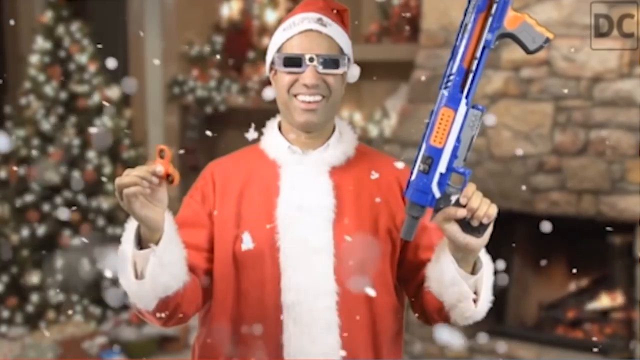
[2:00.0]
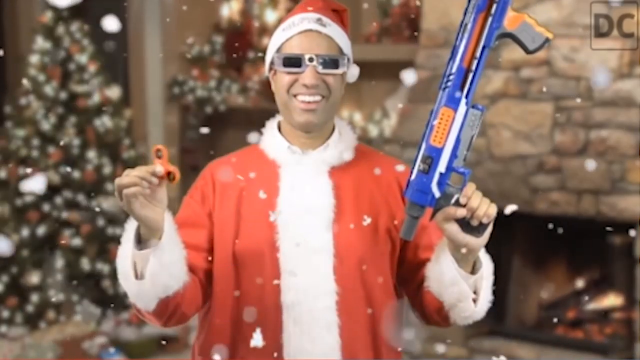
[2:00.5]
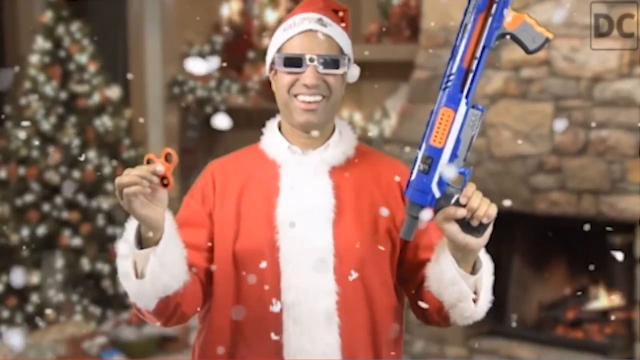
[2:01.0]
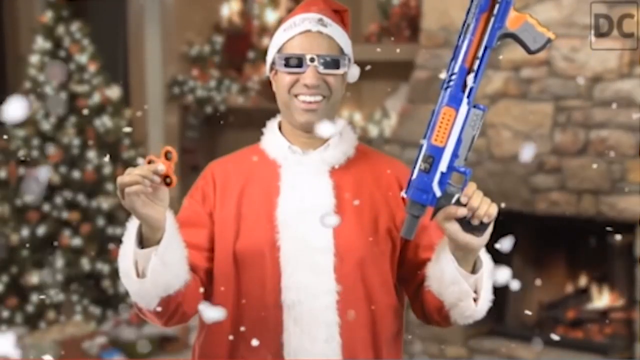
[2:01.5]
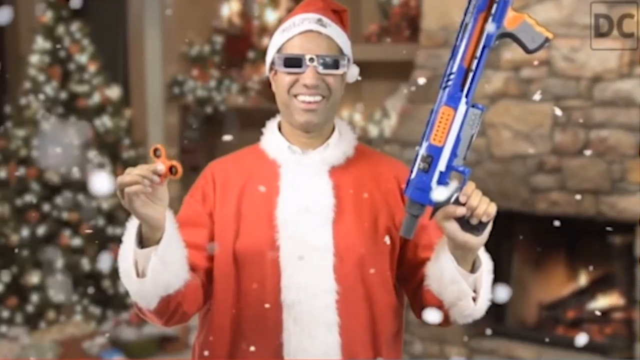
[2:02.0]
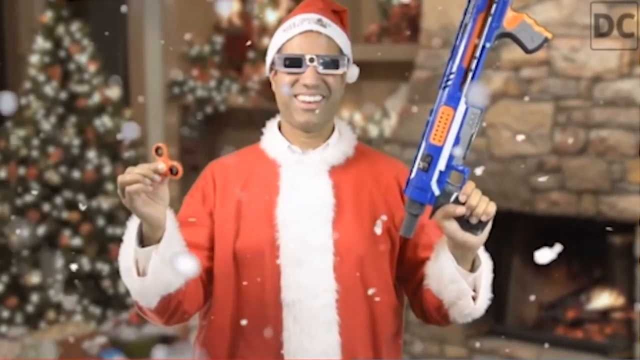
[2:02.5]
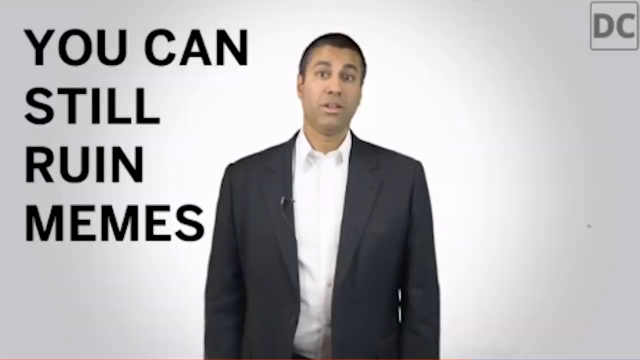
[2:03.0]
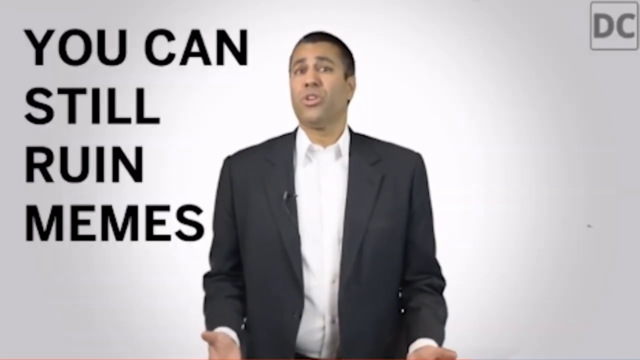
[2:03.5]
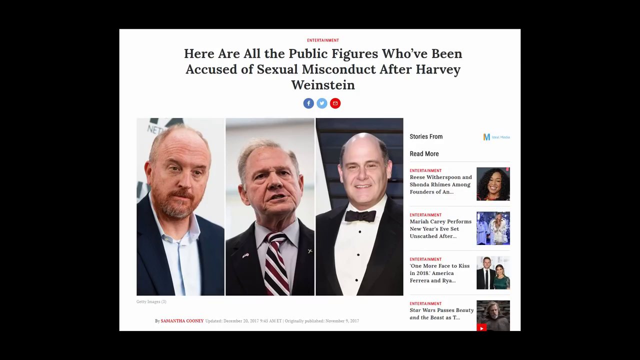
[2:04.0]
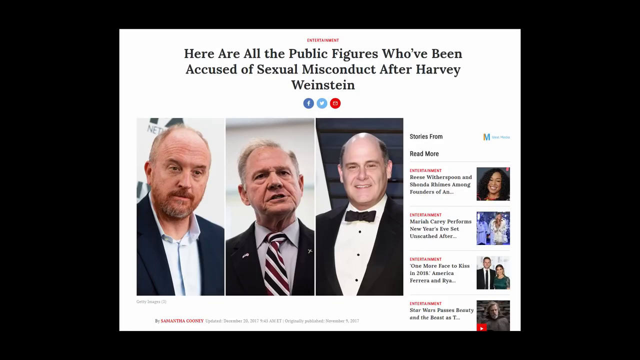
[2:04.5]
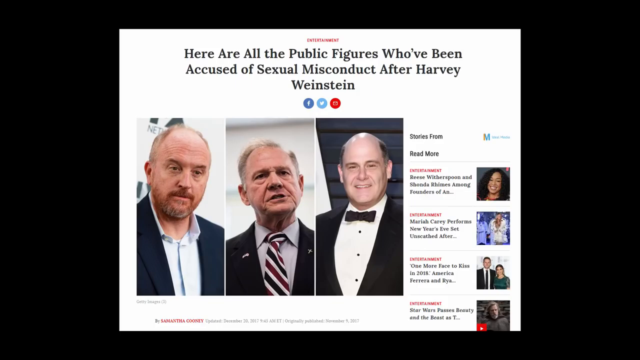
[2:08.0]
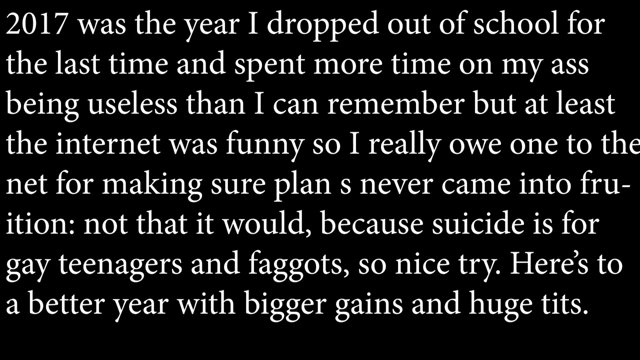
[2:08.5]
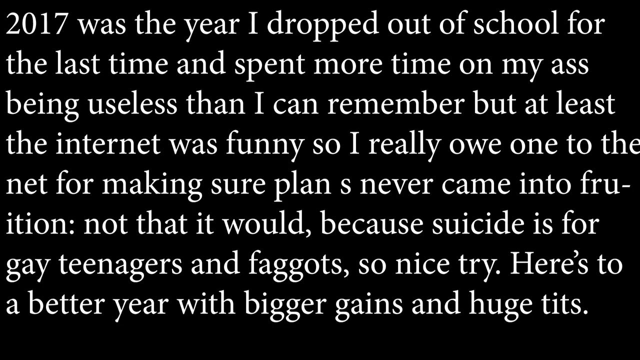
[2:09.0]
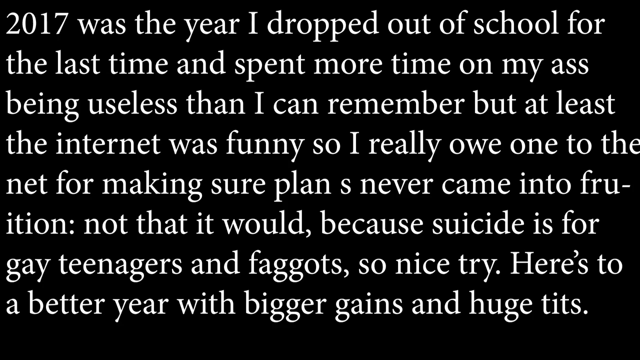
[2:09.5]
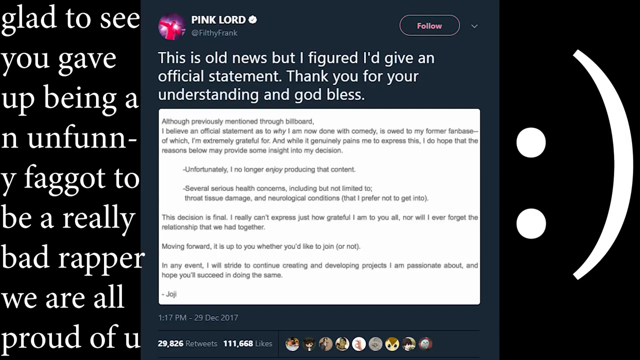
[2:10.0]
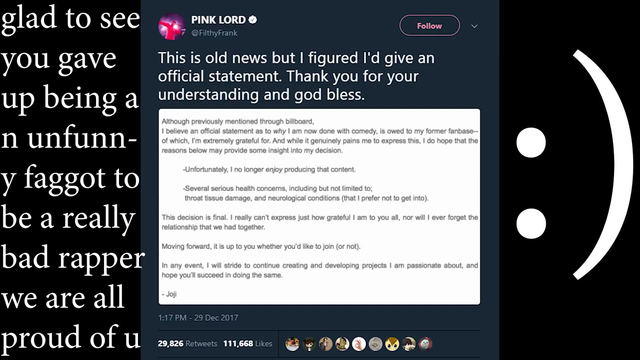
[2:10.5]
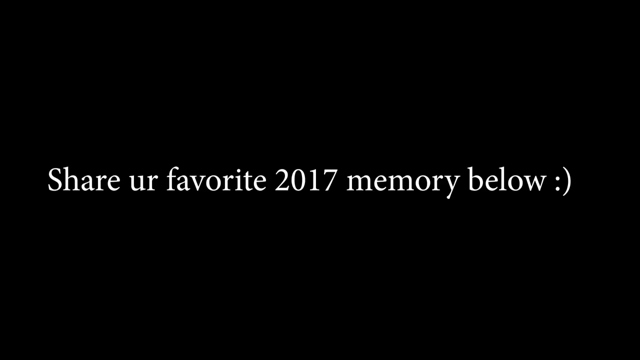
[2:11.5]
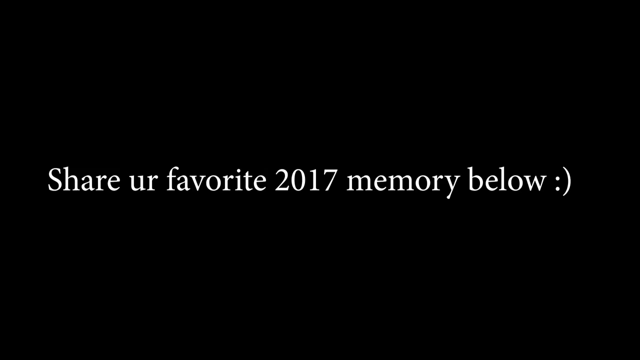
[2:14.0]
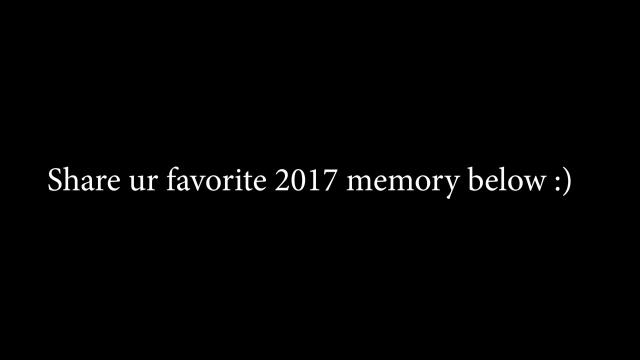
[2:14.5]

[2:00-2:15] A person dressed as Santa Claus is not moving, though Nerf bullets twirl in one of their fingers while the other hand holds a Nerf gun. The setting is decorated for Christmas, and snow falls in front of the person. Pop-ups then appear about Jerusalem and about Trump. Text reads "share your favorite 2017 memory below".